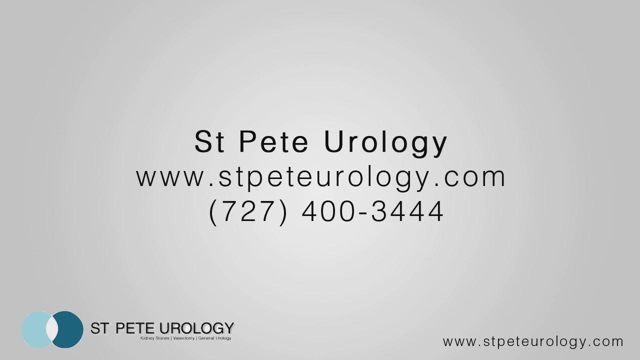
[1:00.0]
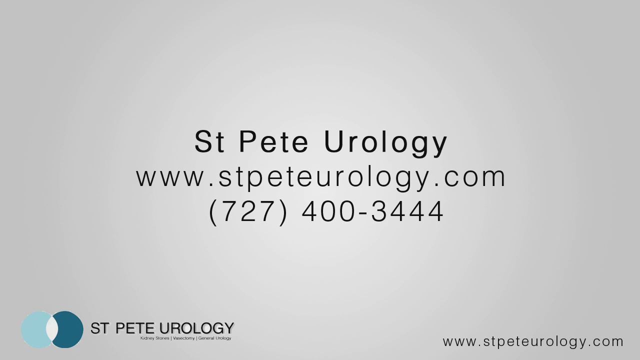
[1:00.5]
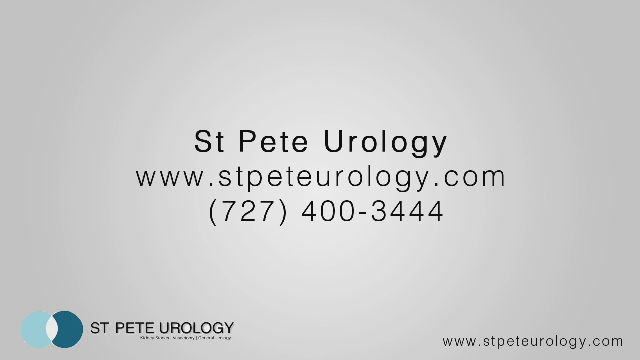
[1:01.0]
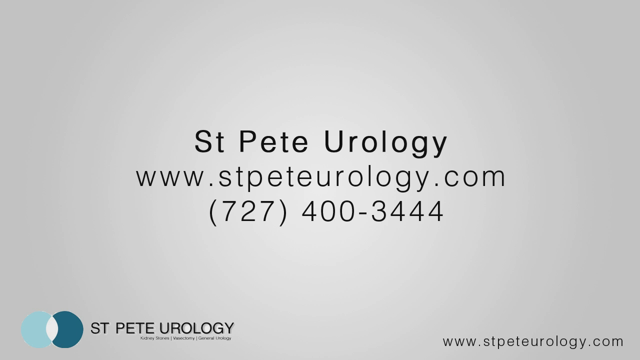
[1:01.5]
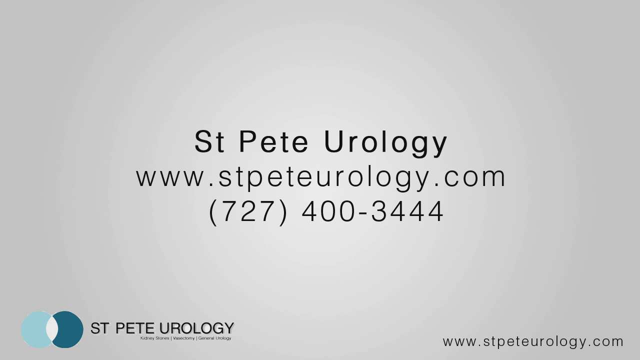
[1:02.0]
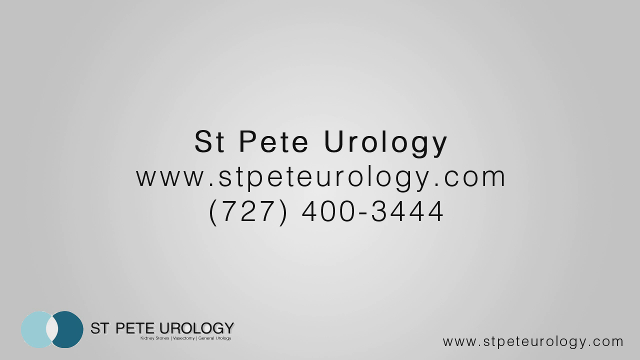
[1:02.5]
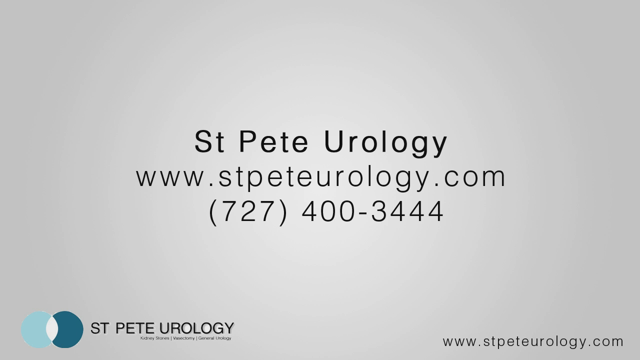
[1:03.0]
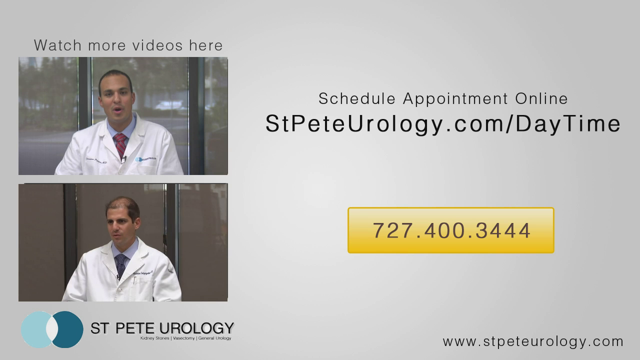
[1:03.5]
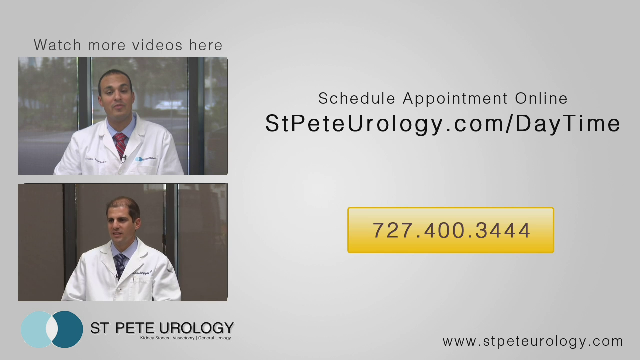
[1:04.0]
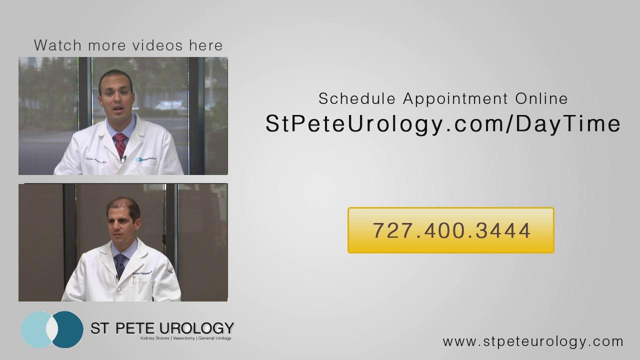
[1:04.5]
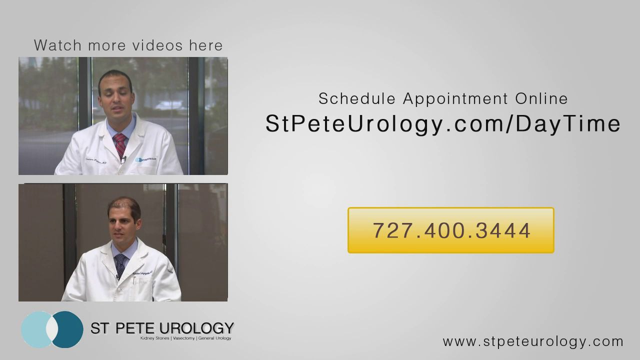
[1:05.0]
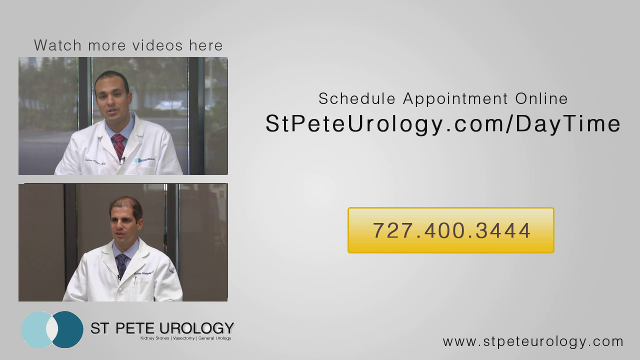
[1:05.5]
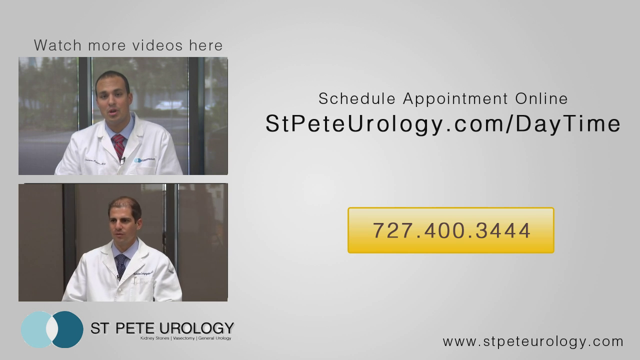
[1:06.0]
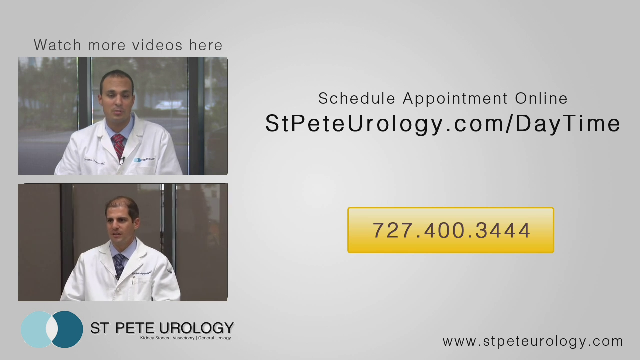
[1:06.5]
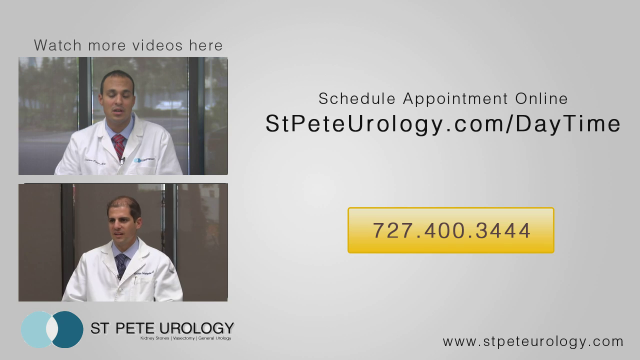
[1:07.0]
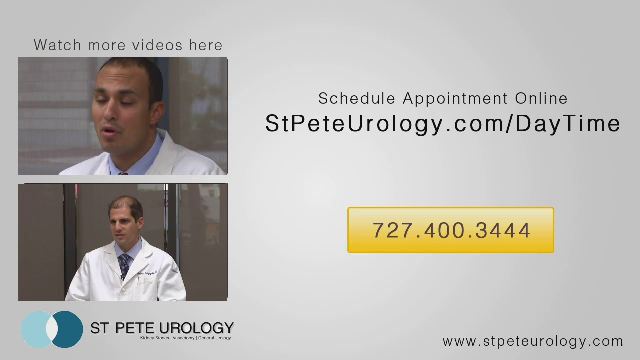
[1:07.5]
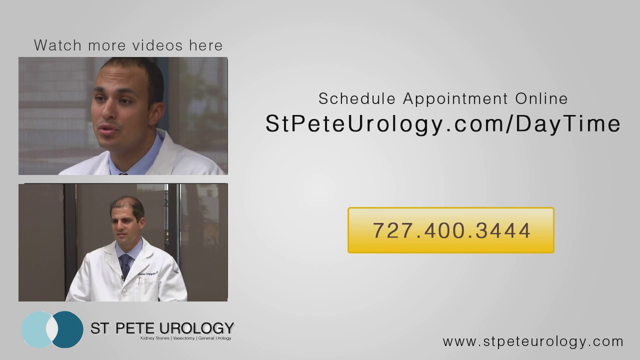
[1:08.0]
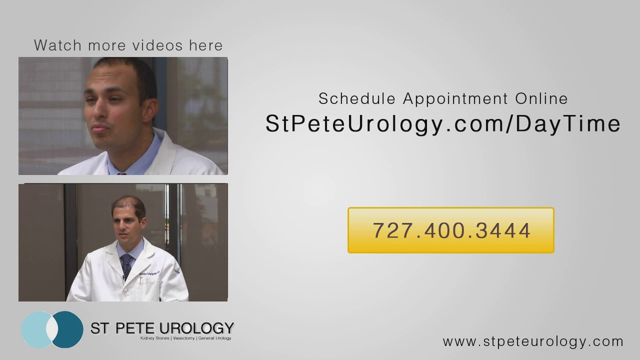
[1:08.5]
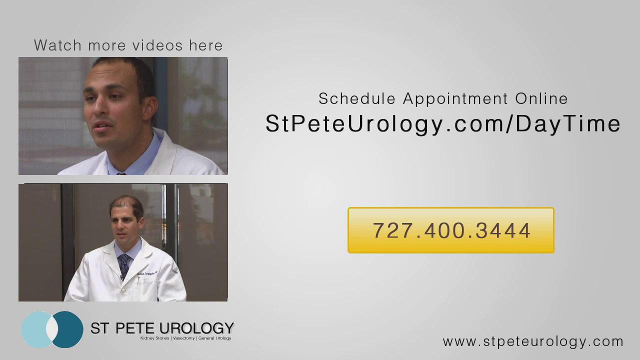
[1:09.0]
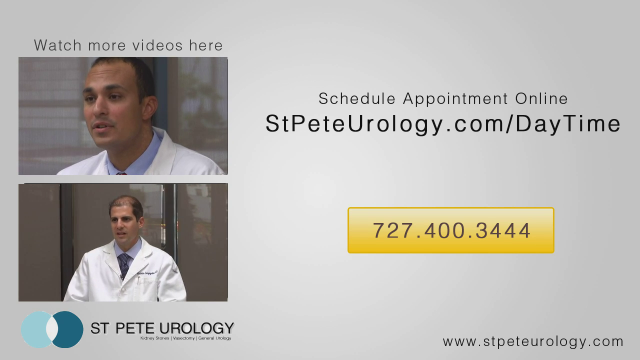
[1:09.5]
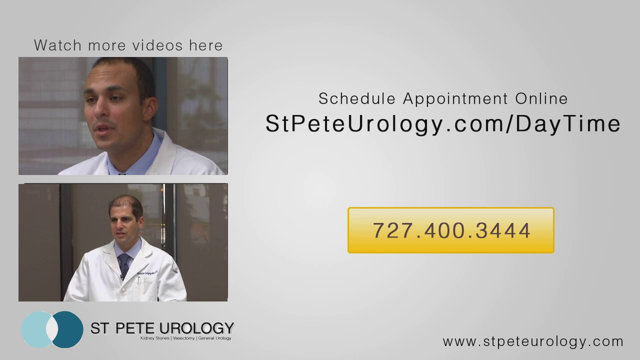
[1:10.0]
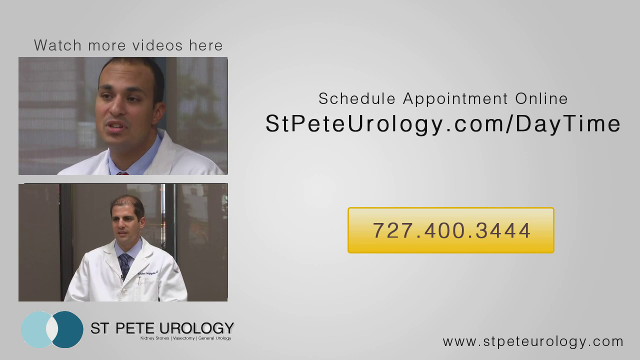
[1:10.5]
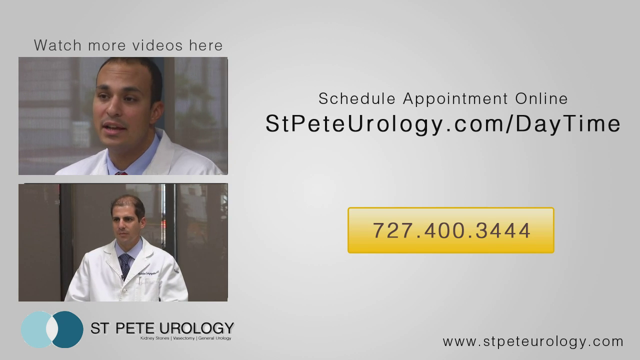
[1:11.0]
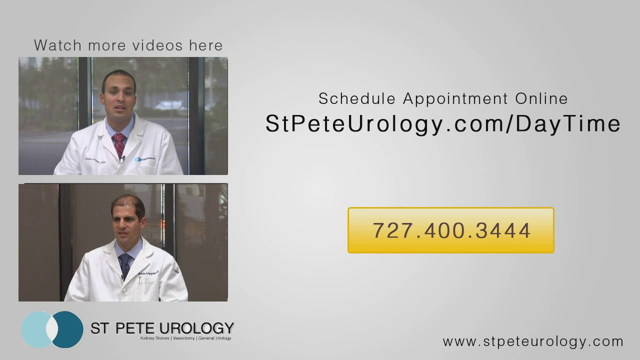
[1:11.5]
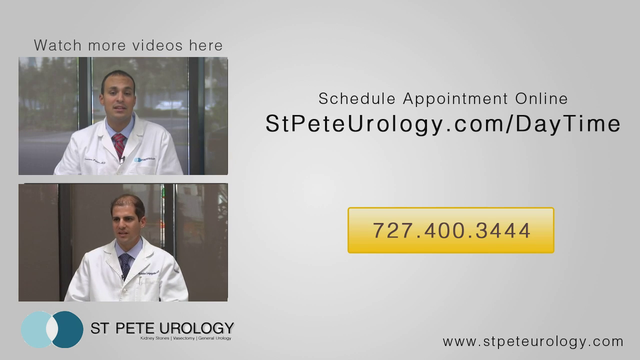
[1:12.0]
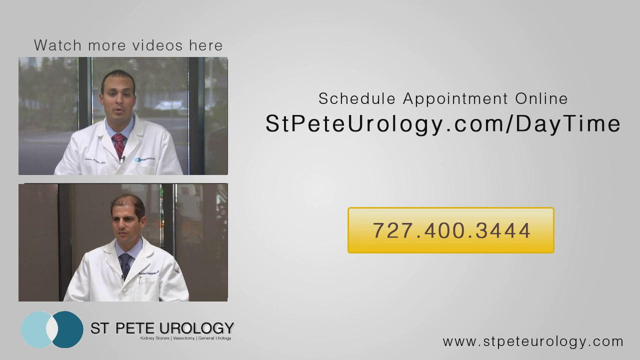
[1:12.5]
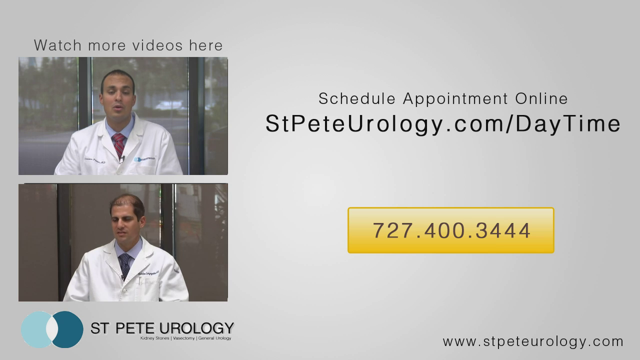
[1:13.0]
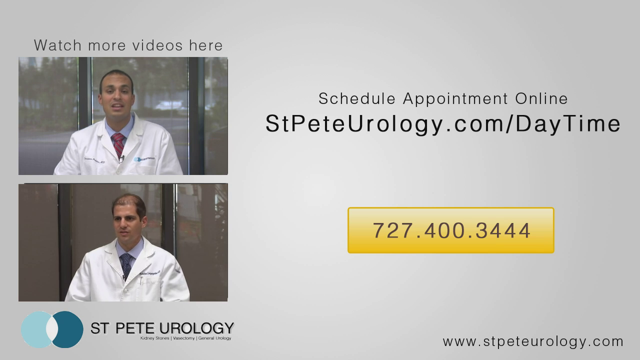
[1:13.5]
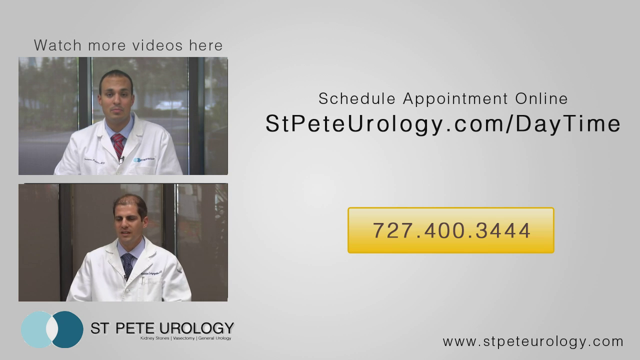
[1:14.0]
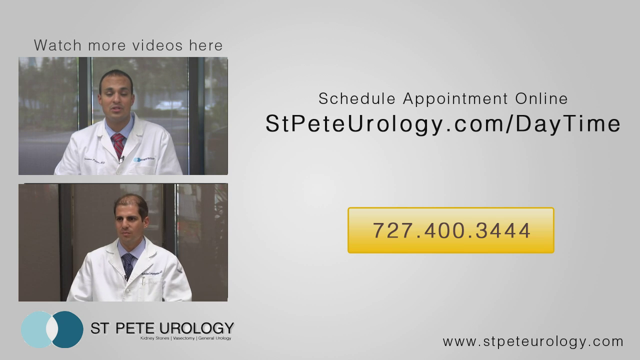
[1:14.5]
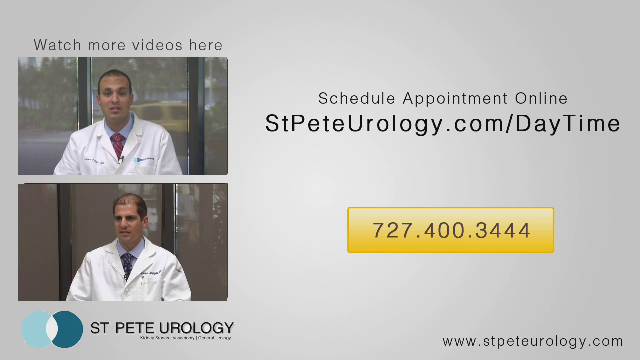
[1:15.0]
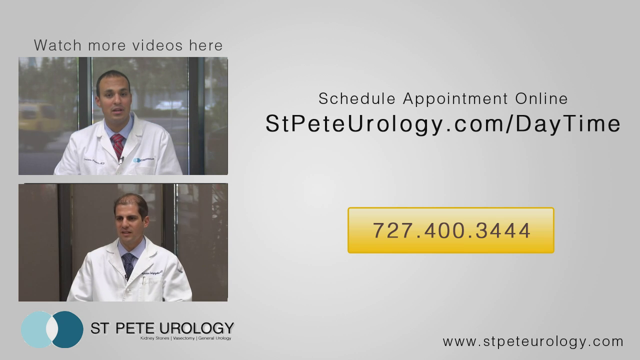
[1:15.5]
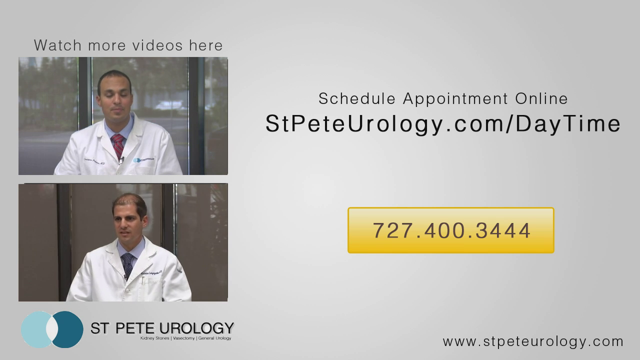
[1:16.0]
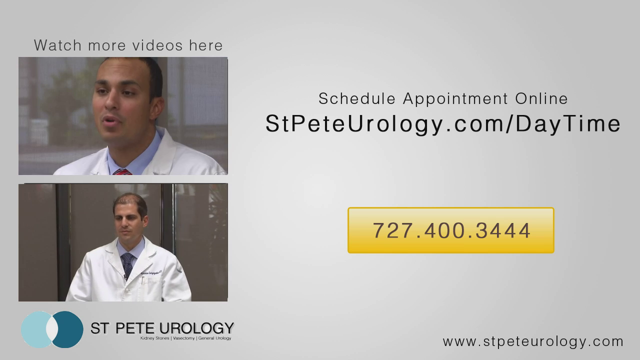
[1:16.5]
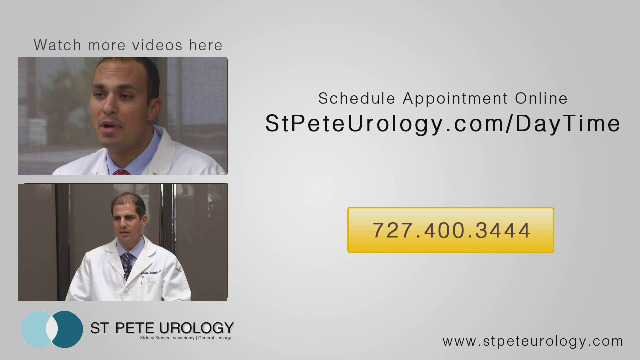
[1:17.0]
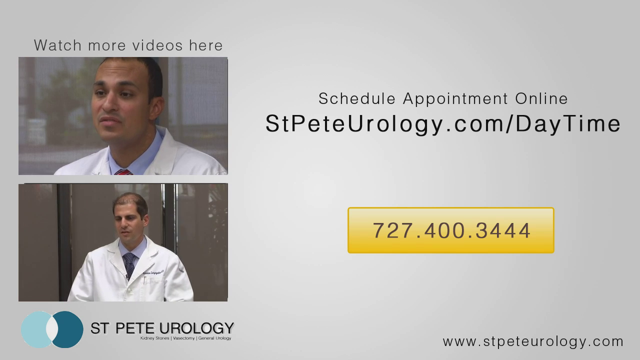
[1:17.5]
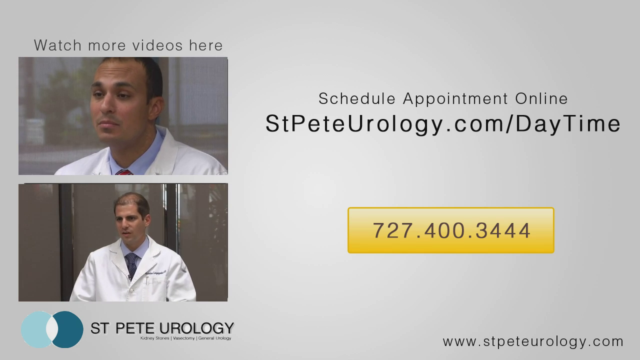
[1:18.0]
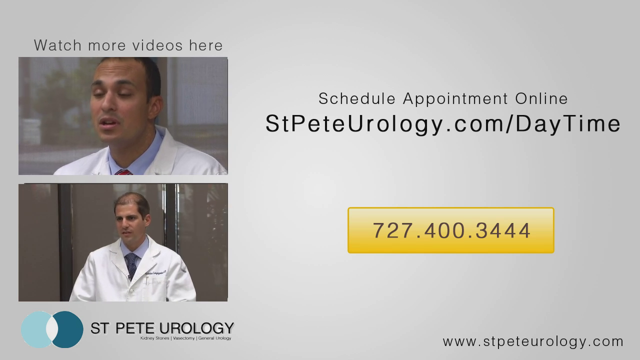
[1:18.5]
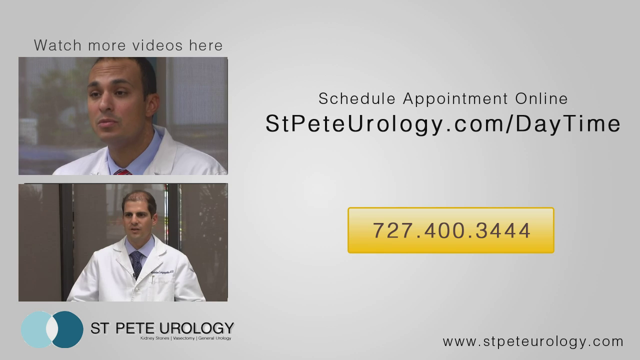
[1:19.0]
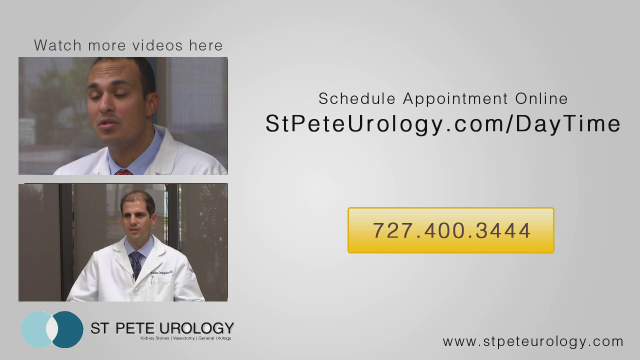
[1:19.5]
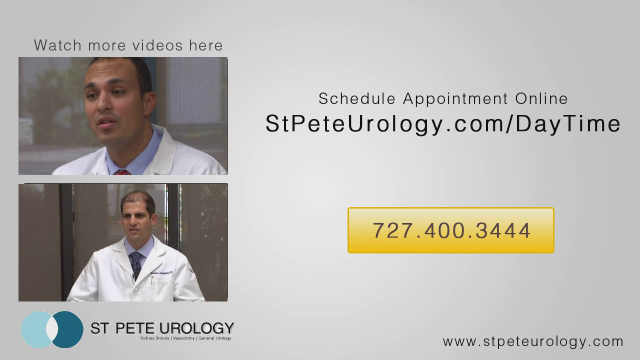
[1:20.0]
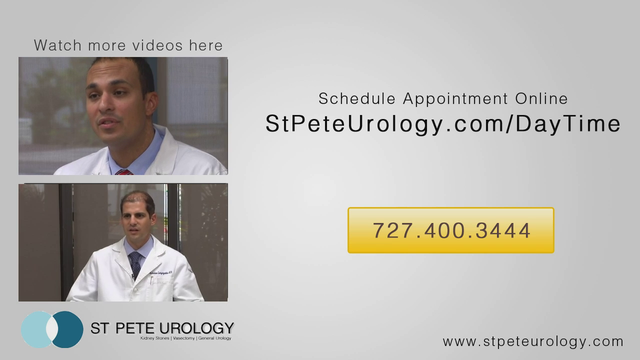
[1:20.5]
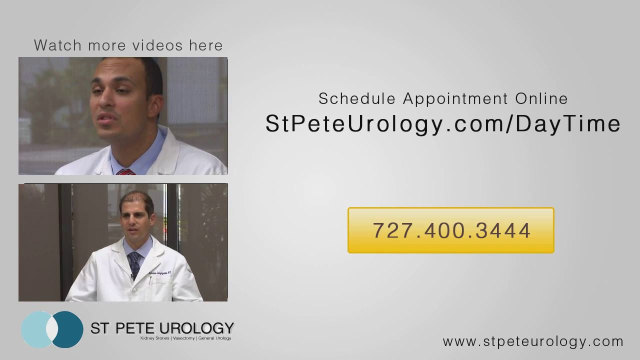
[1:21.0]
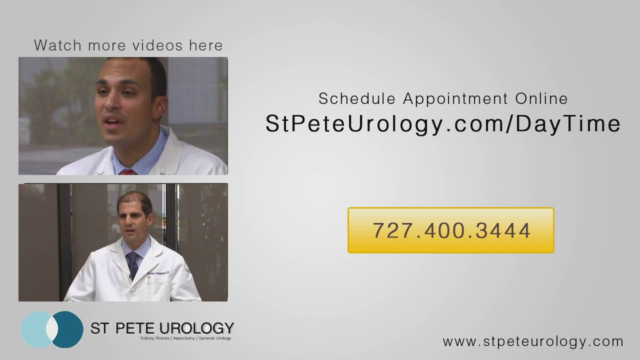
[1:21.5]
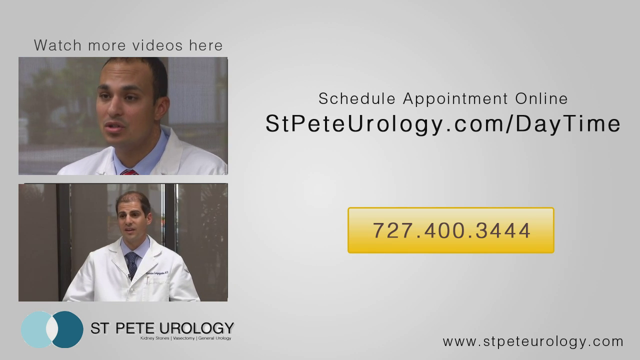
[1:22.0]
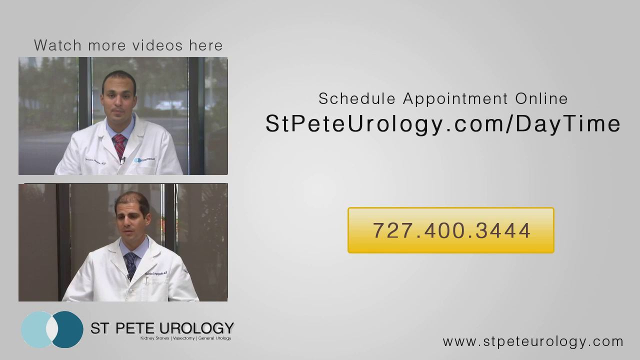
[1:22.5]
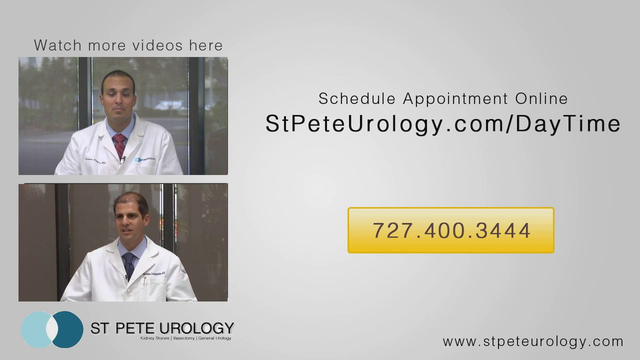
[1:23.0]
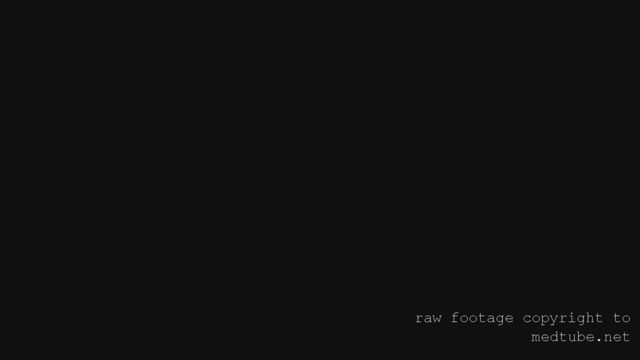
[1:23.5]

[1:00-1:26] The light gray screen with the black words "St. Pete Urology www.stpeteurology.com 727-400-3444" continues. Then, on the left side, two screens show two men talking in front of the camera, both wearing white lab jackets. Above the videos it says "watch more videos here." On the right side, black words read "schedule appointment online www.stpeteurology.com," and in the bottom right of the screen a phone number reads "727-400-3444." The videos of the two men talking in front of the camera continue to play. The video quality here is high, with a good amount of light so that everything is clear and visible.